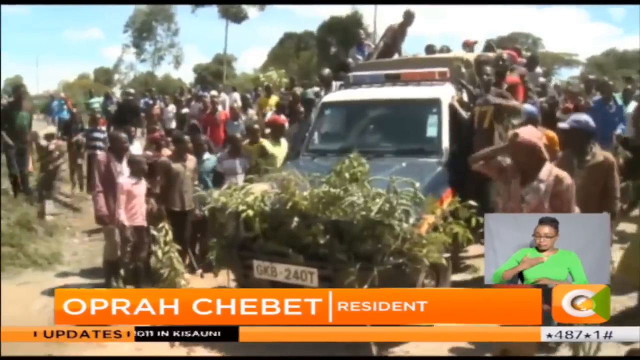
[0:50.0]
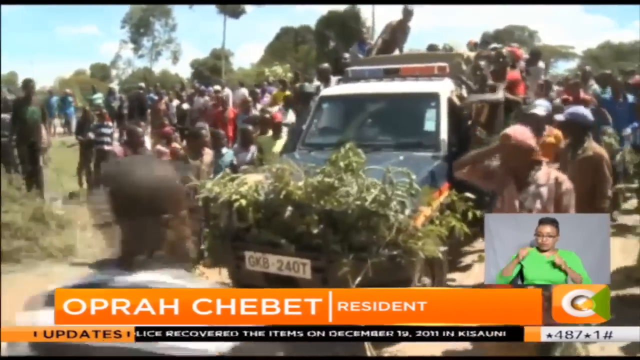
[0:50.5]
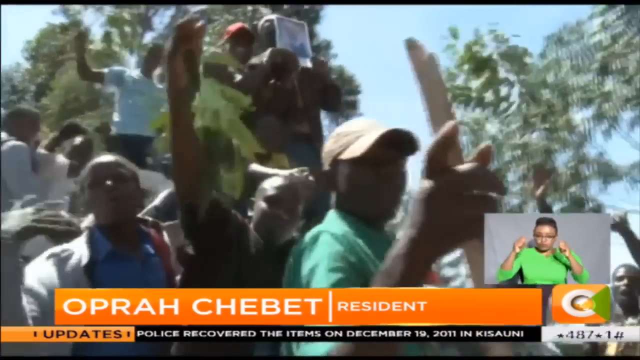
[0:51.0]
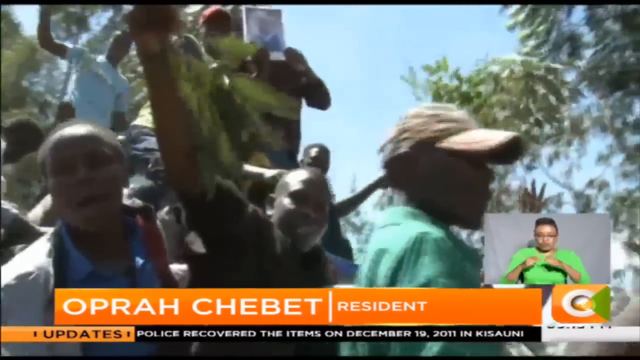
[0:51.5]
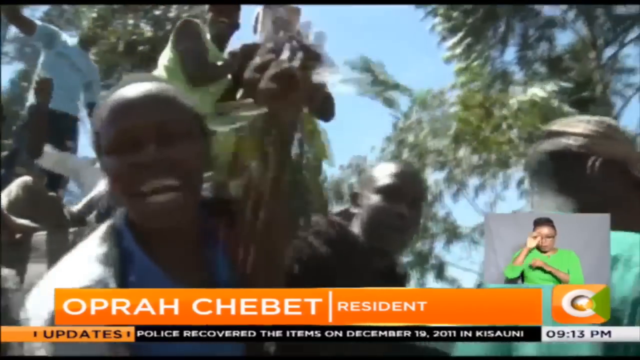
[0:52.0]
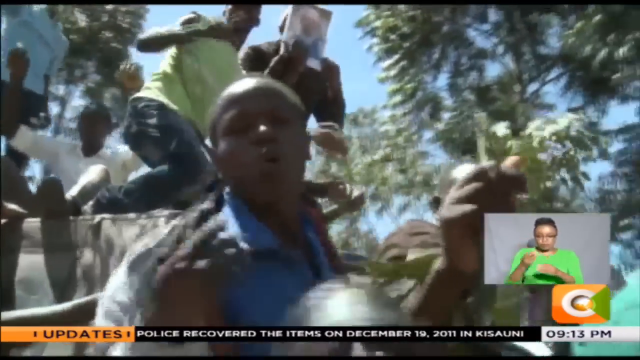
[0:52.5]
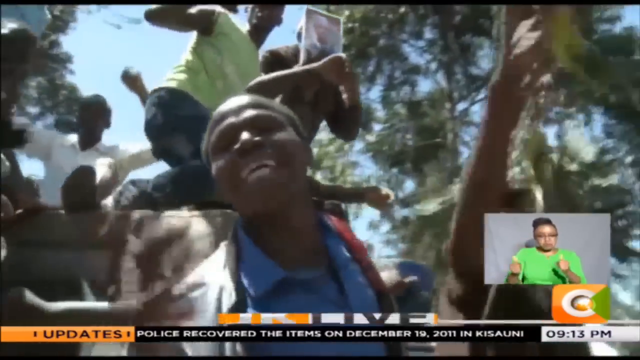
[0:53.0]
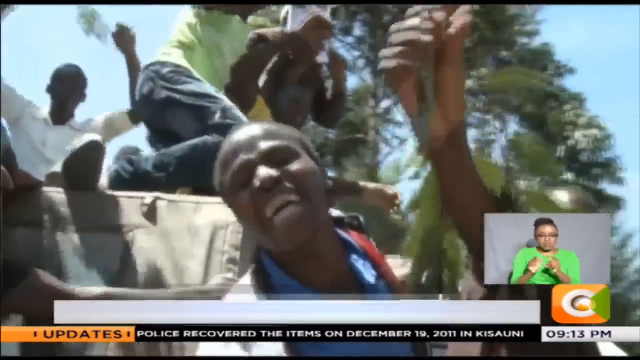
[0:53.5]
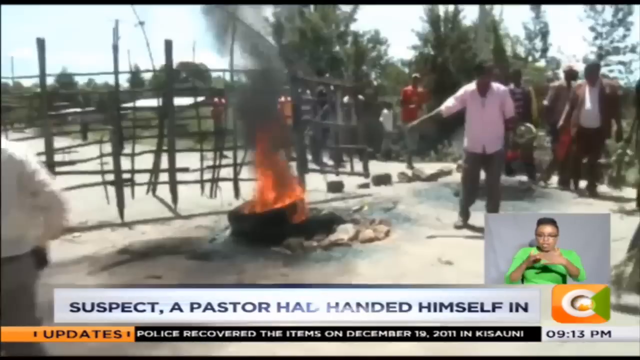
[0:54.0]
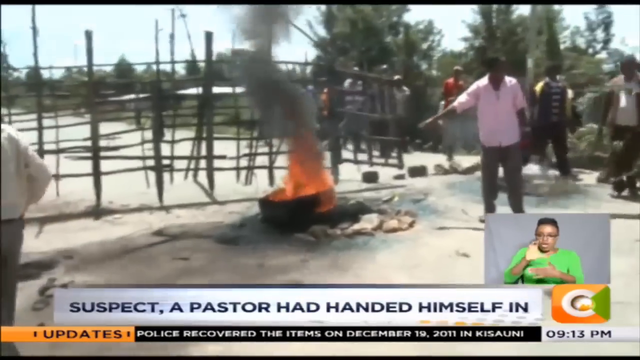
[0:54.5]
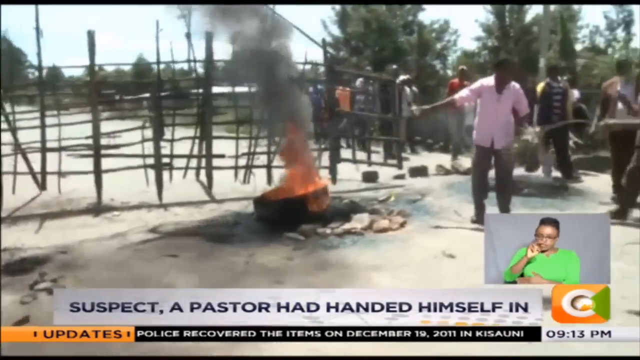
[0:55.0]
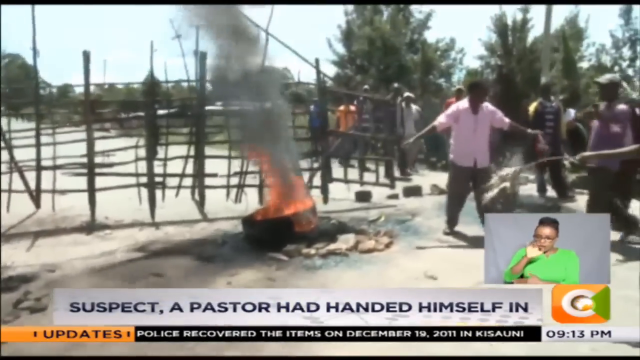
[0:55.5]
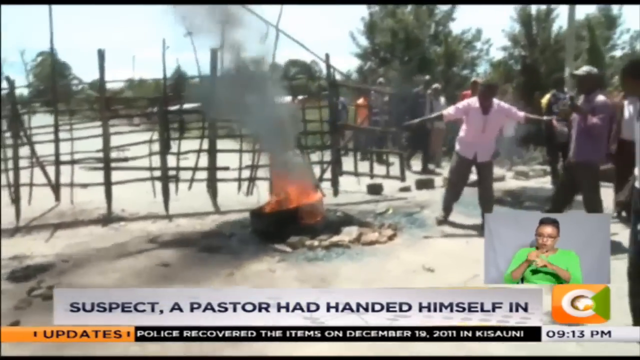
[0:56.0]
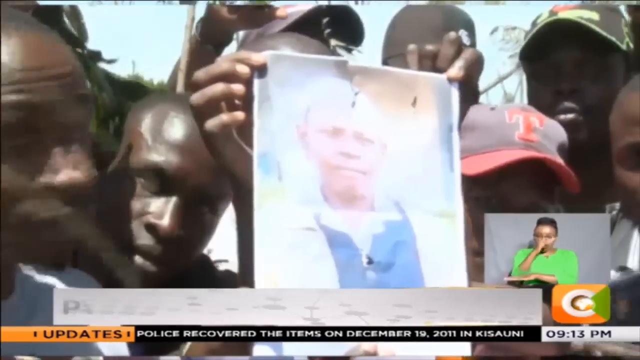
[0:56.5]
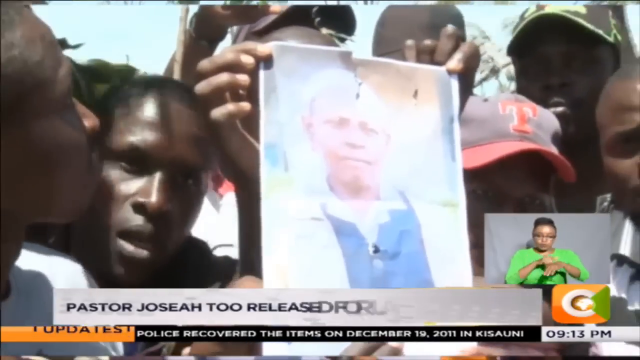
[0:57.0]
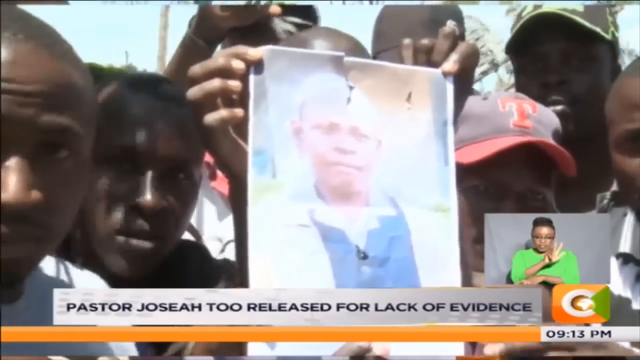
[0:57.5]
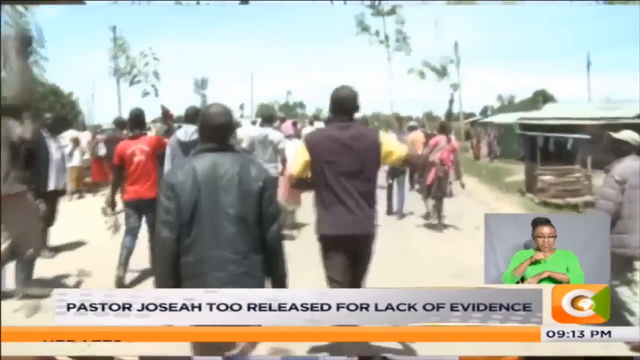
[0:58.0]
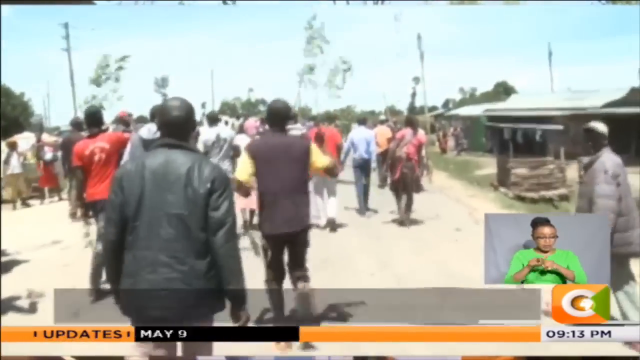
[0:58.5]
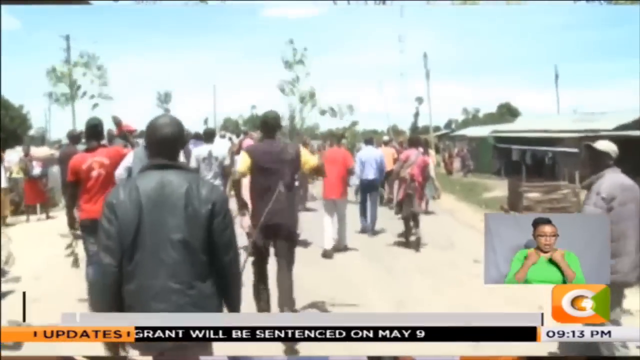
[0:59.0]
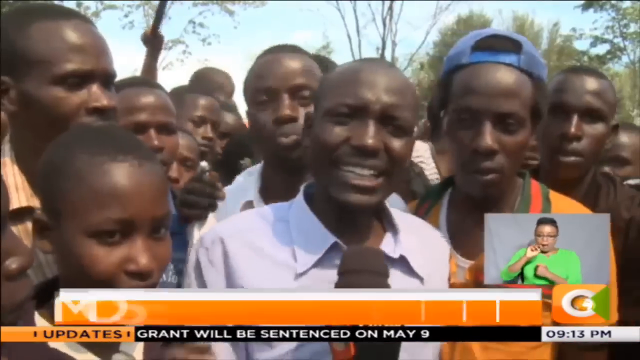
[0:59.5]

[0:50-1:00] A vehicle with red and blue lights on top and a number of plants on the front slowly moves forward as a number of people jump onto it. The video cuts to people standing on a vehicle as it drives past, many holding branches and sticks, and at least one holding up a picture of a woman. It cuts to a small fire with a number of people standing around it, and then to a person holding up an image of a woman. A title at the bottom reads "Pastor Joseah Too released for lack of evidence". More people are shown talking and looking upset, followed by an interview with a man.